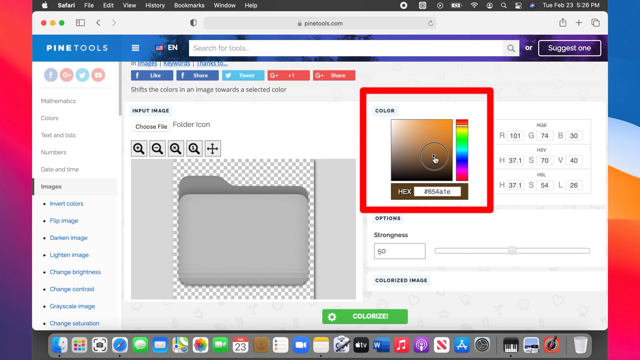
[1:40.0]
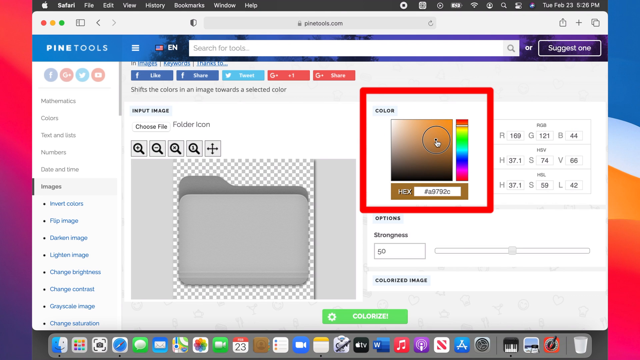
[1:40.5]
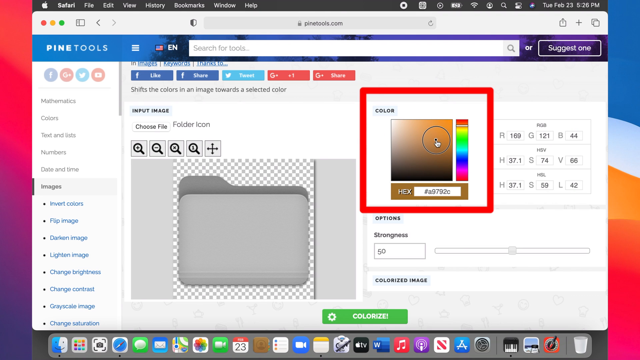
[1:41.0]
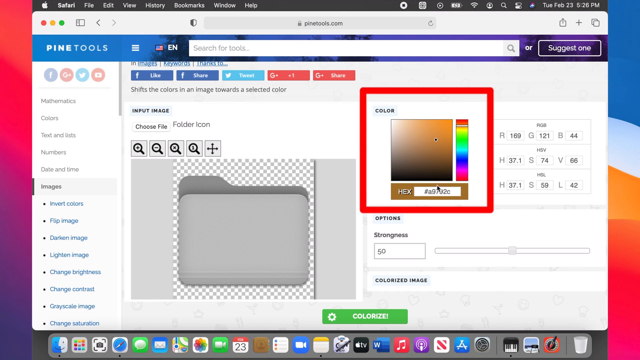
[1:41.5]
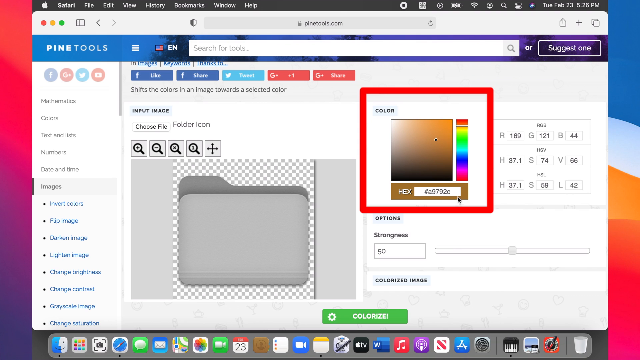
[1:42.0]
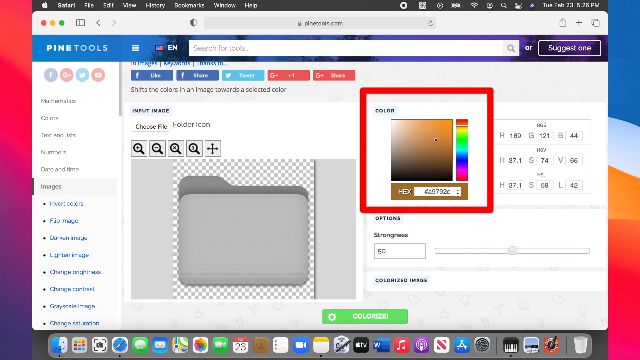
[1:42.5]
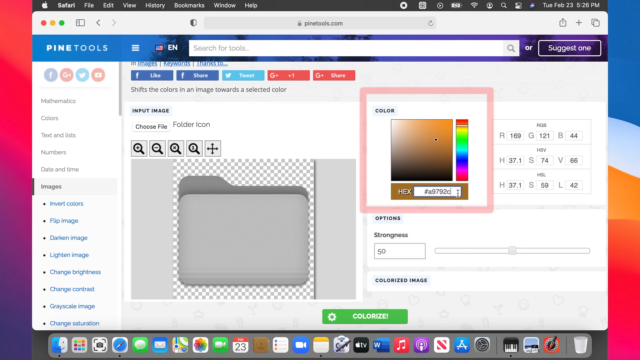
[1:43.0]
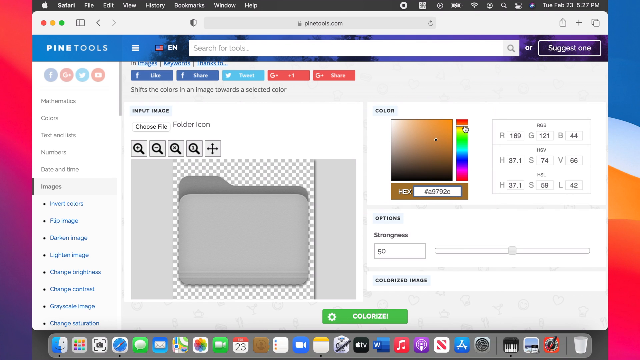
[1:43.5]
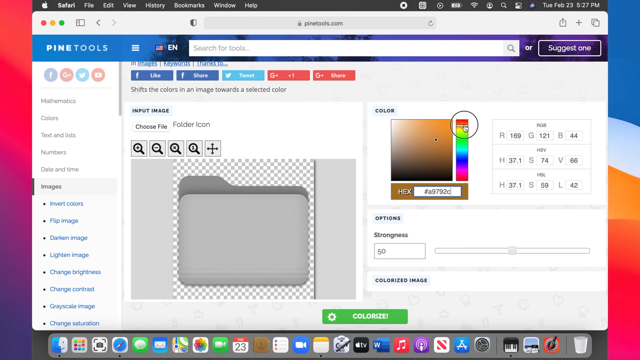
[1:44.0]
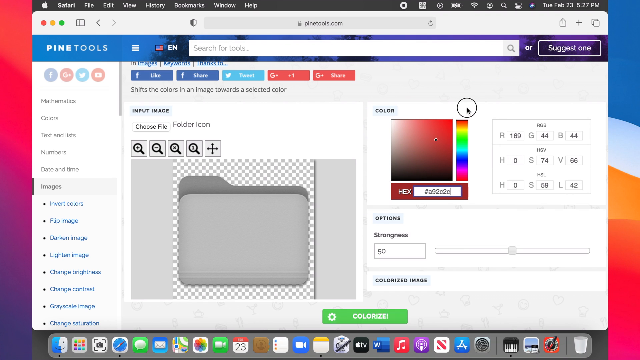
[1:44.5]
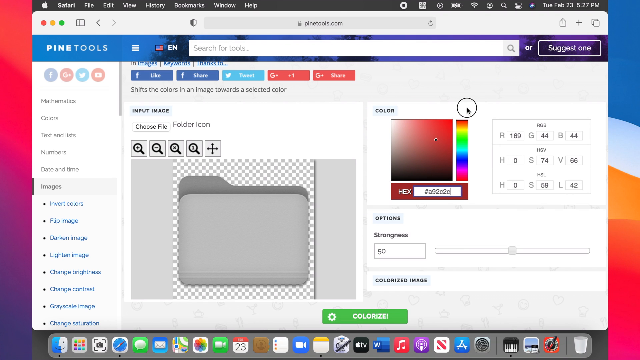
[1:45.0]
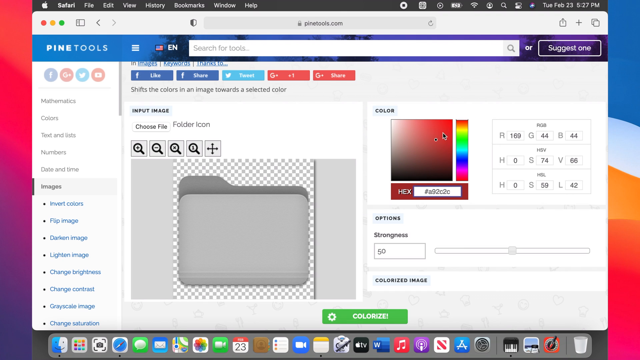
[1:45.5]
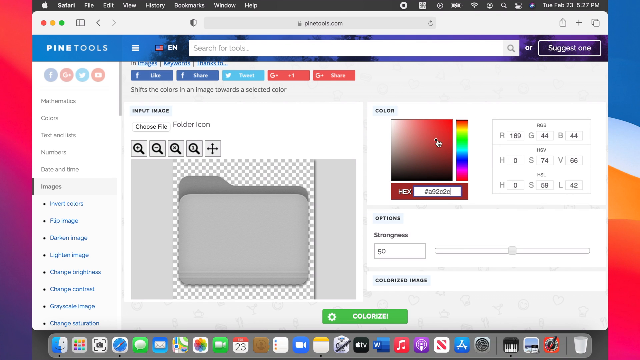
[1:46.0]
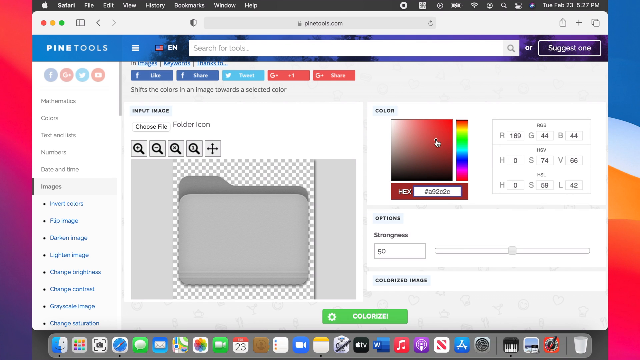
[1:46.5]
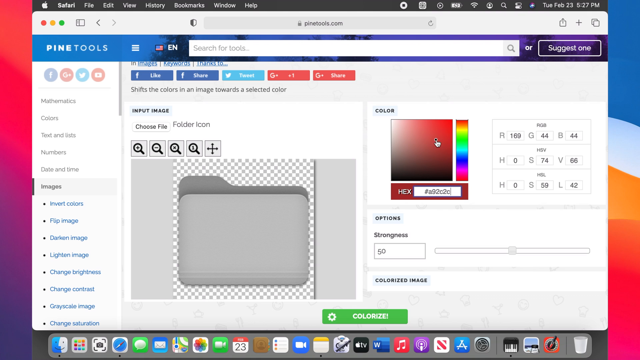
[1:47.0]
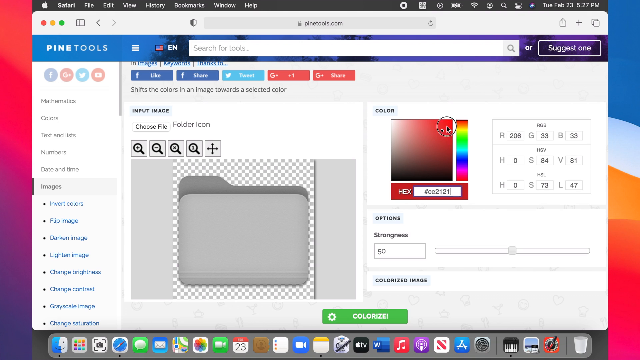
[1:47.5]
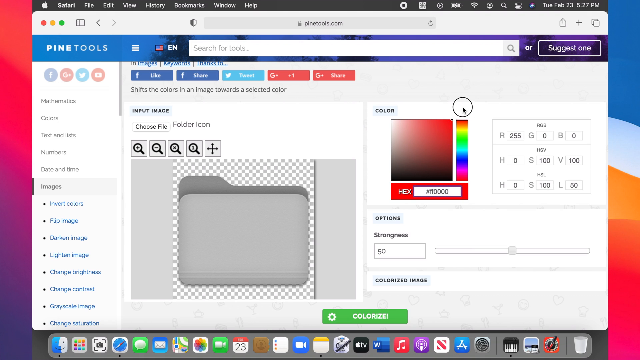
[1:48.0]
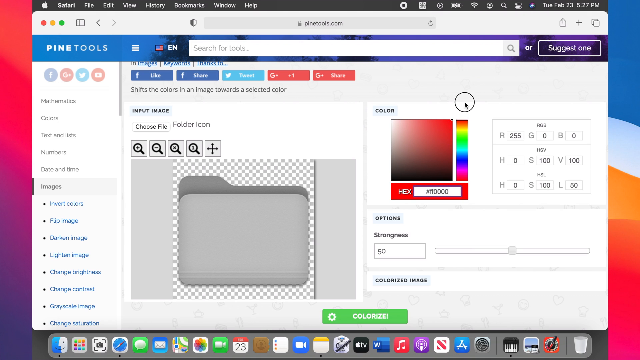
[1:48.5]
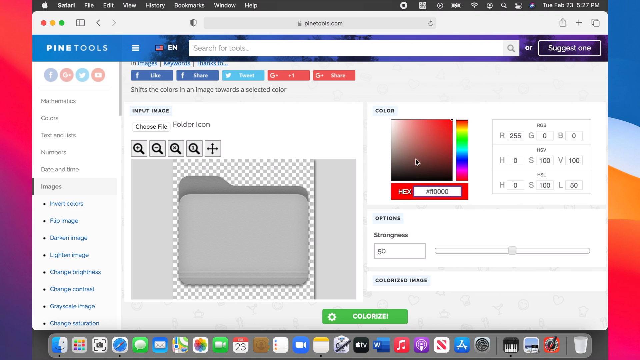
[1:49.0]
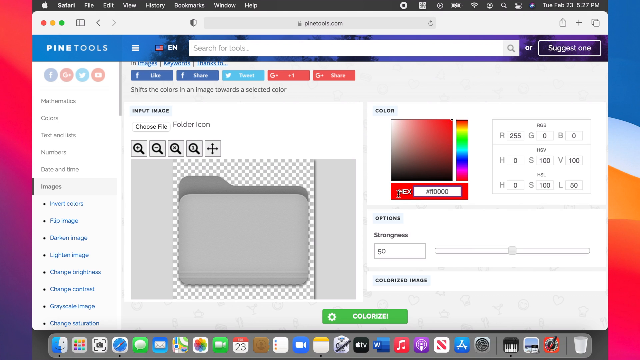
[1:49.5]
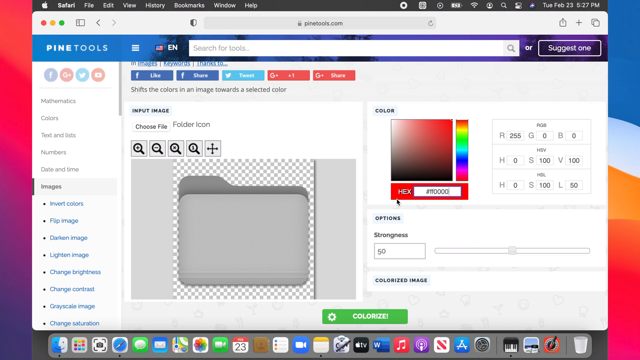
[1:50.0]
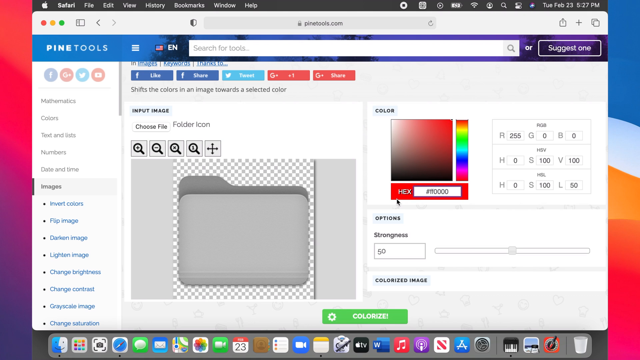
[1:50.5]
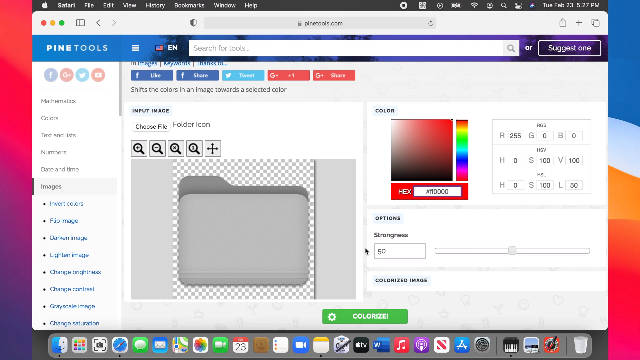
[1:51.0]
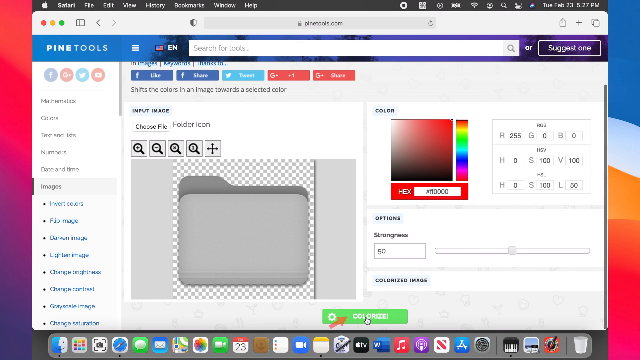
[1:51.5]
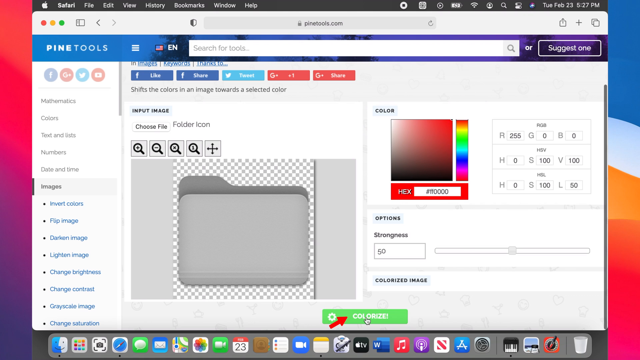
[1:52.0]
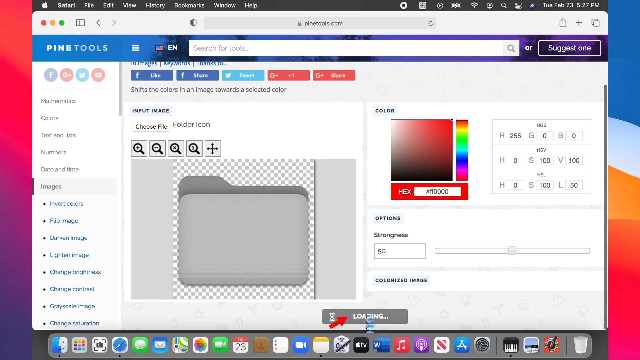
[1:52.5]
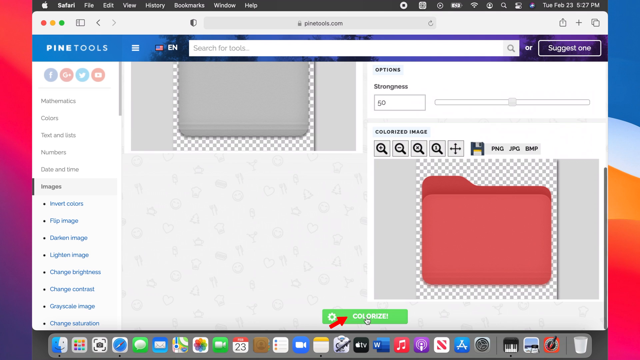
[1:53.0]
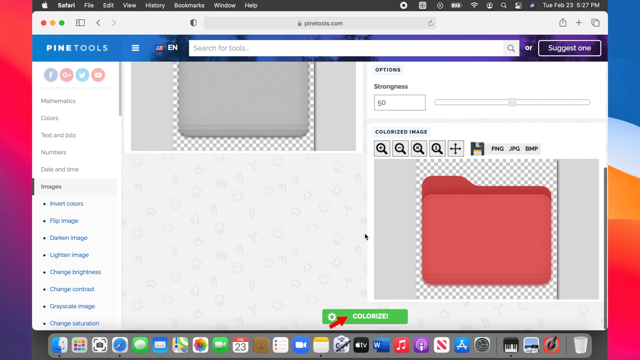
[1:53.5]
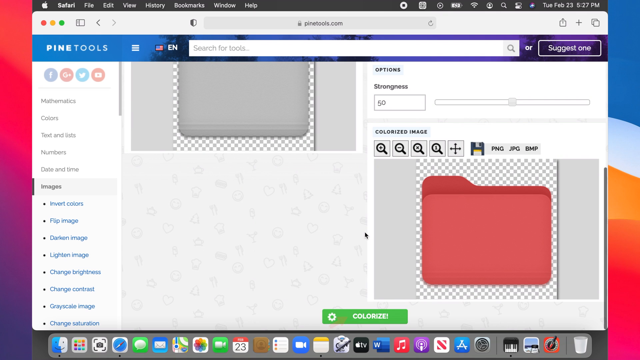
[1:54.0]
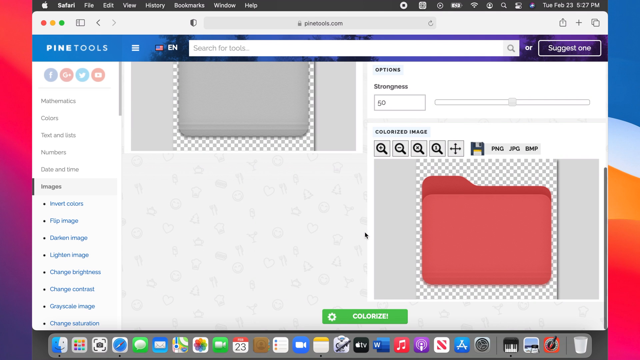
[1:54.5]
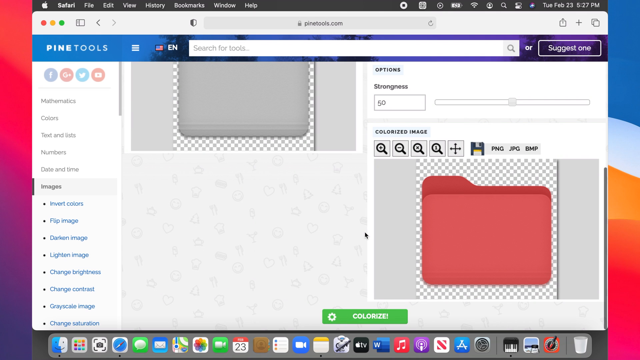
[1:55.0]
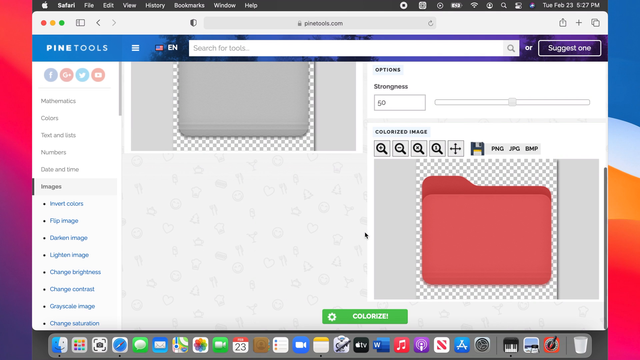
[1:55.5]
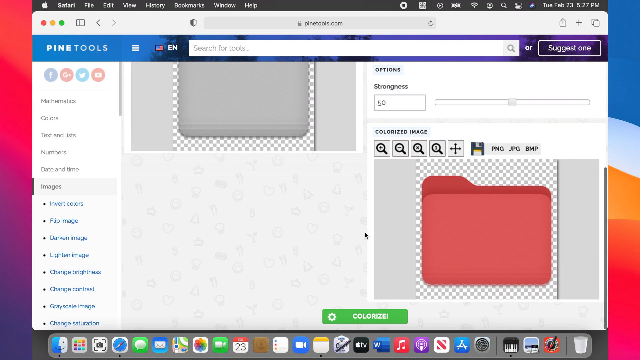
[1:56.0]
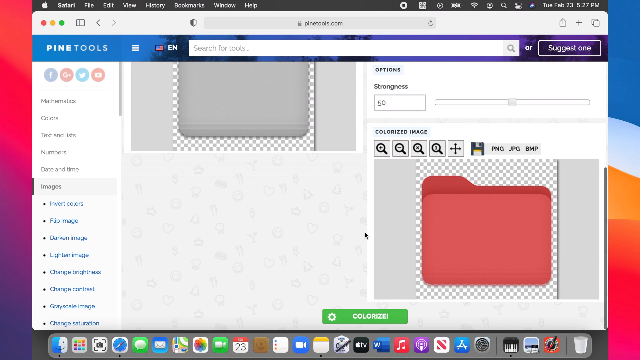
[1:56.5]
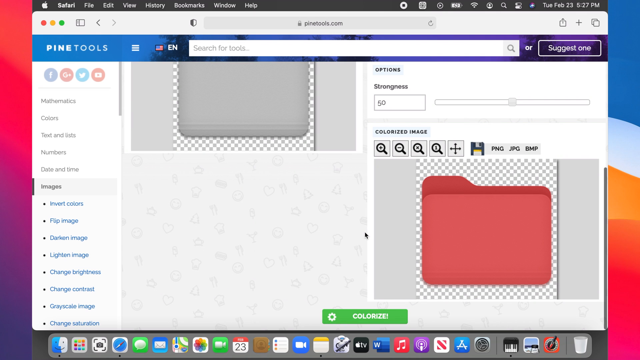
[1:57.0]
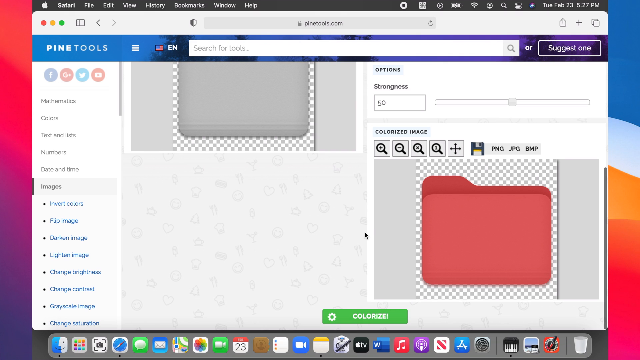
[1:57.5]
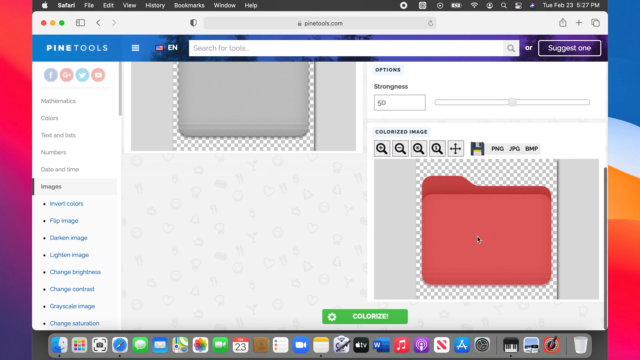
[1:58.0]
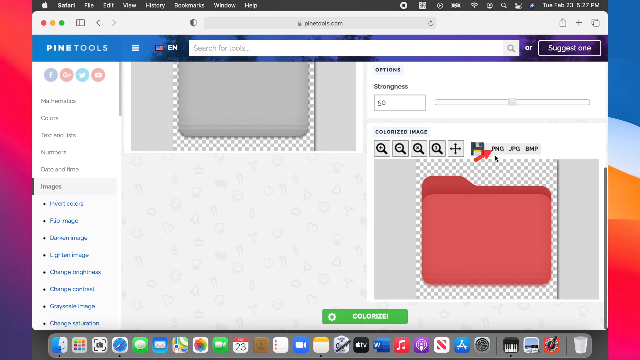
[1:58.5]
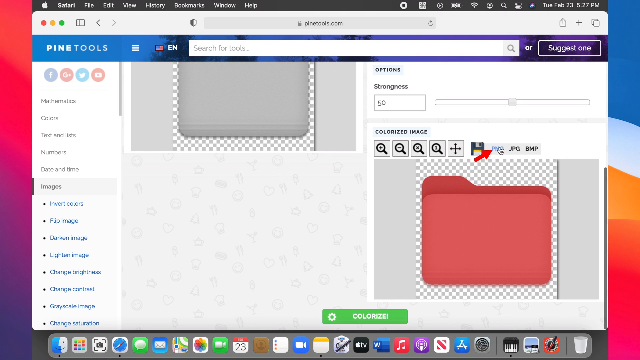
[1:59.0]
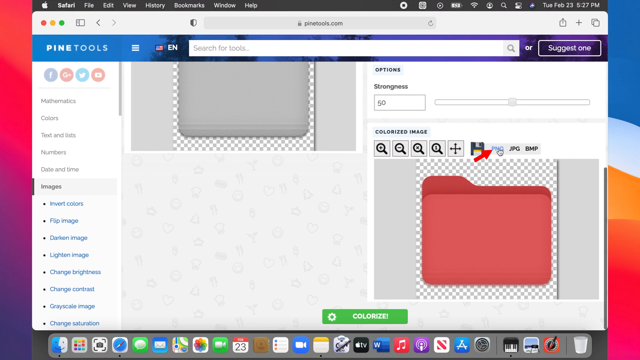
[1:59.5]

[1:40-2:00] On the same scene, the user, who had chosen orange to color the folder, now switches to a red color, apparently to show the many variations of colors available. At the bottom, the user clicks a button highlighted in green that says "colored", which works, and then moves on to the next screen.